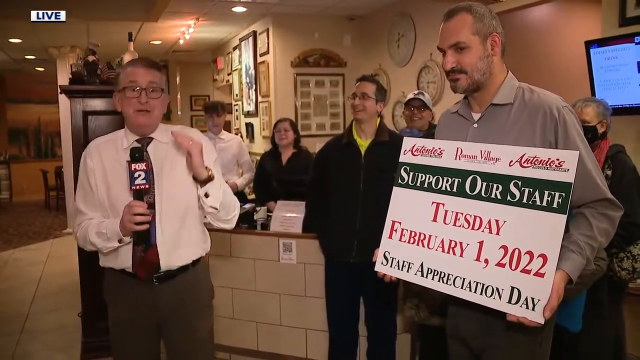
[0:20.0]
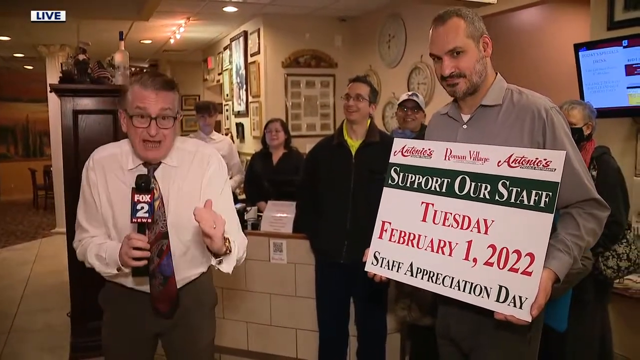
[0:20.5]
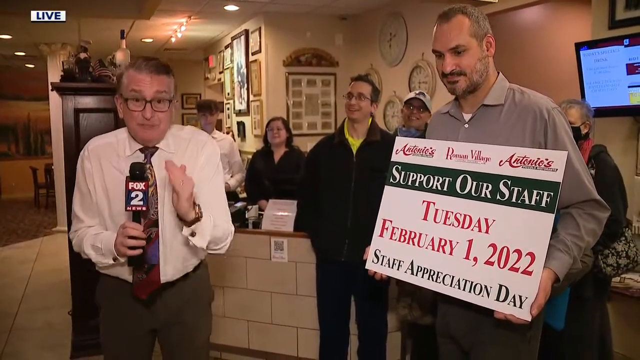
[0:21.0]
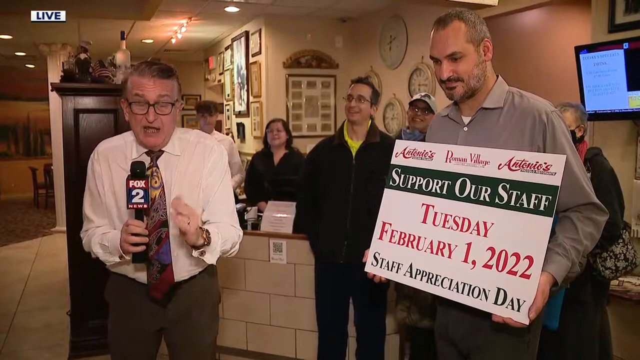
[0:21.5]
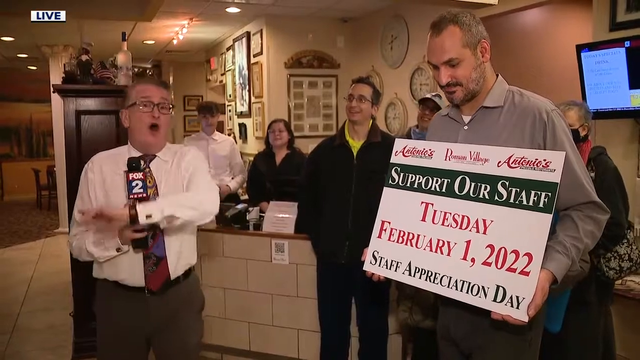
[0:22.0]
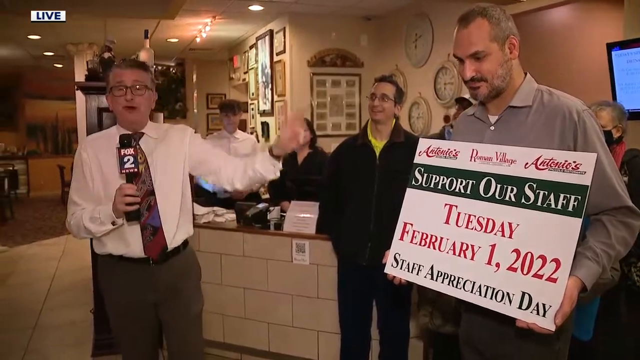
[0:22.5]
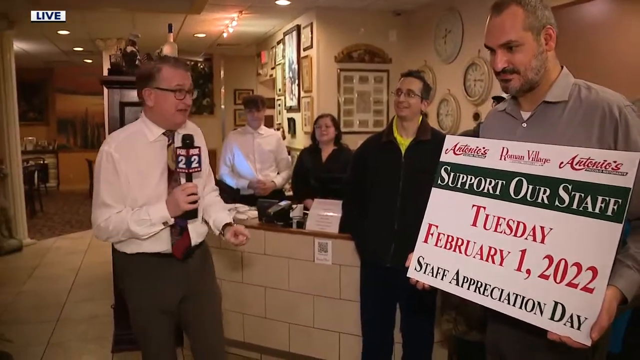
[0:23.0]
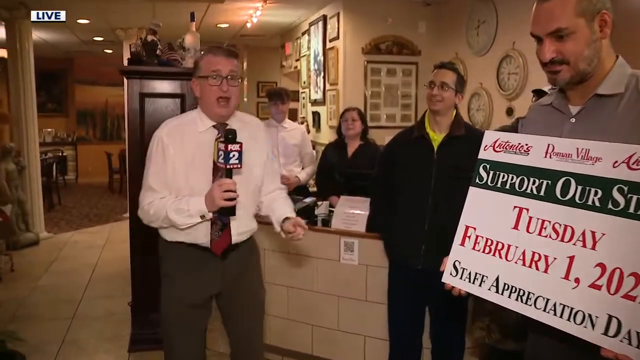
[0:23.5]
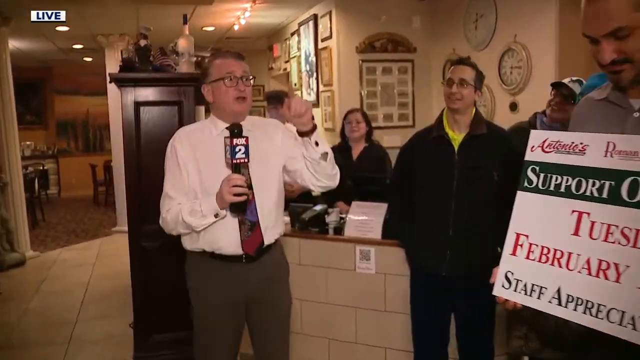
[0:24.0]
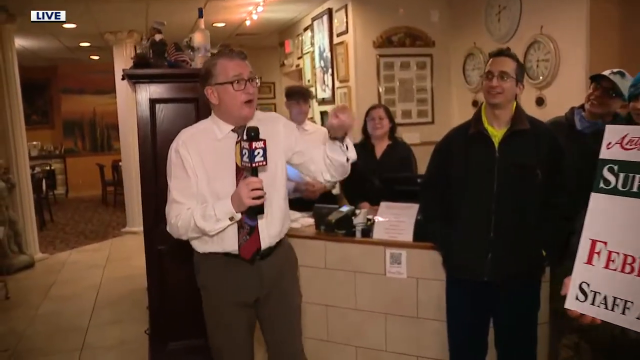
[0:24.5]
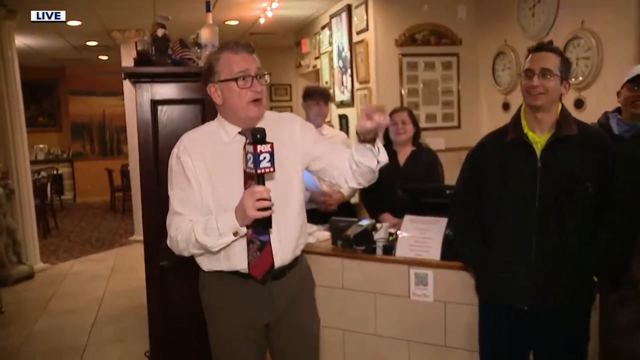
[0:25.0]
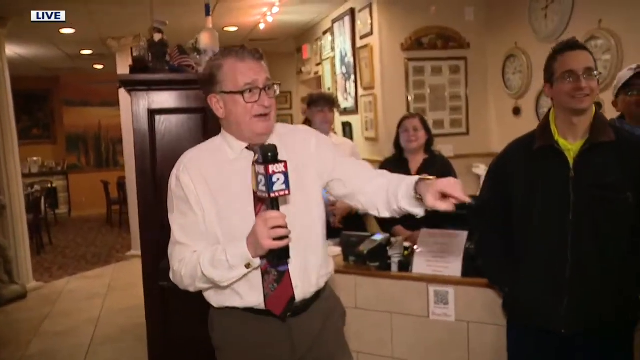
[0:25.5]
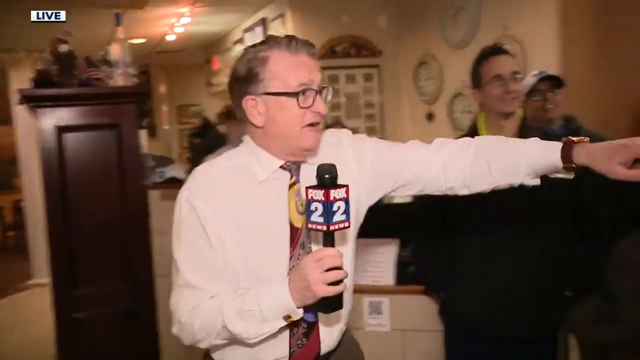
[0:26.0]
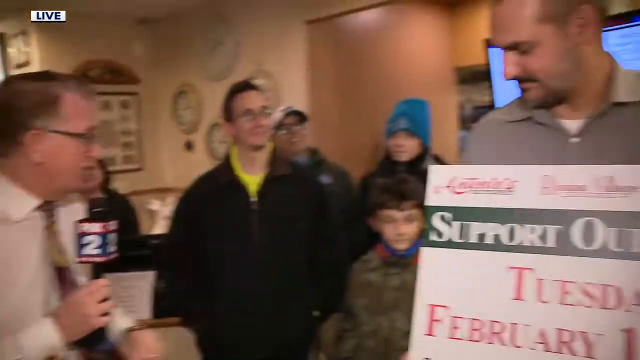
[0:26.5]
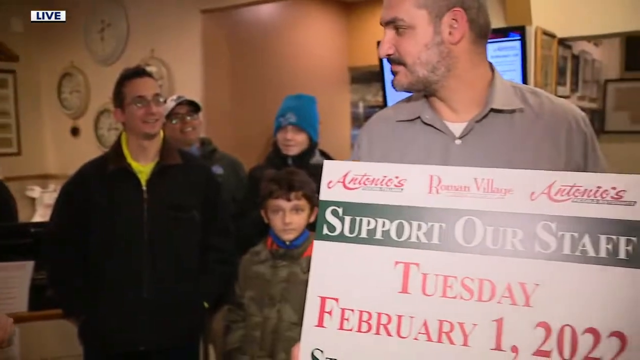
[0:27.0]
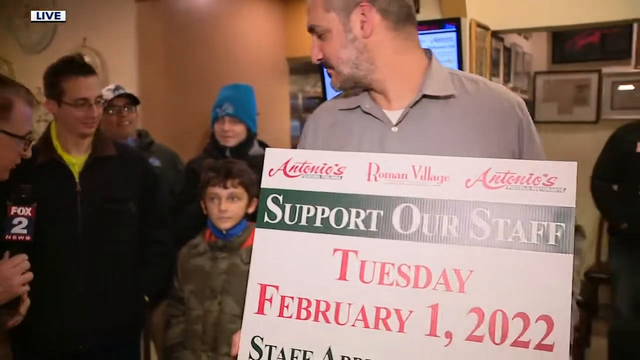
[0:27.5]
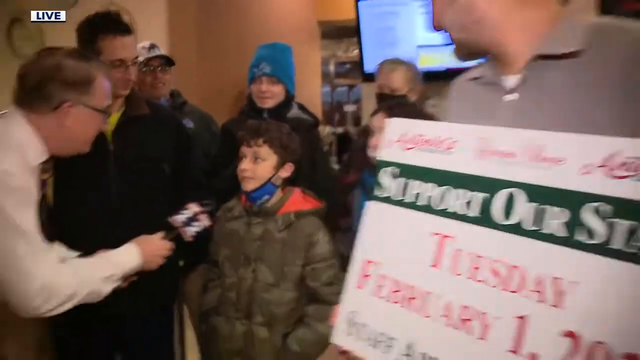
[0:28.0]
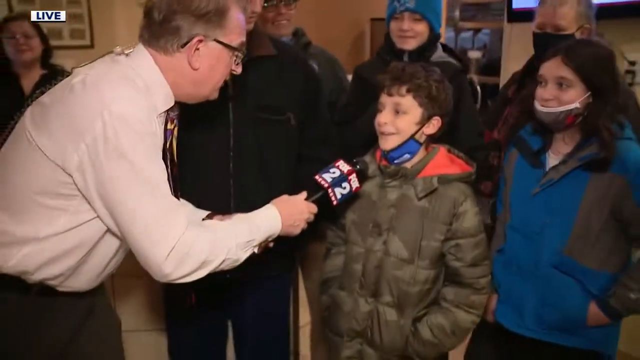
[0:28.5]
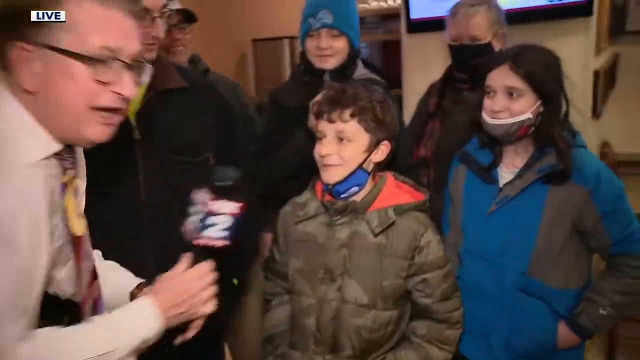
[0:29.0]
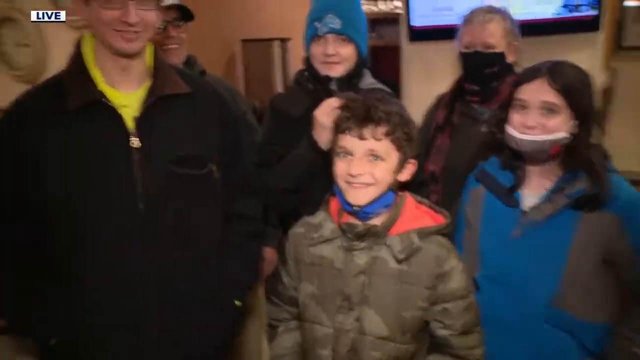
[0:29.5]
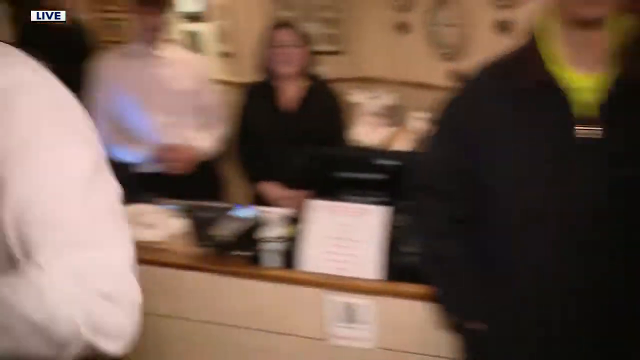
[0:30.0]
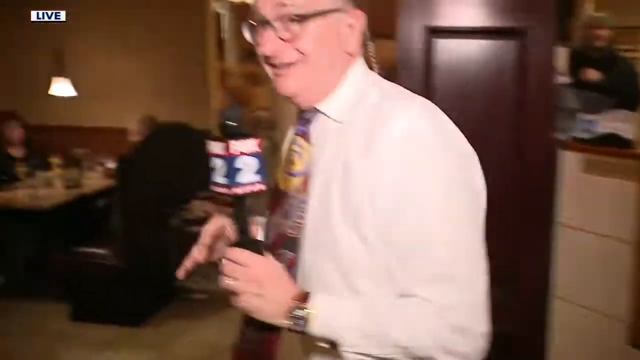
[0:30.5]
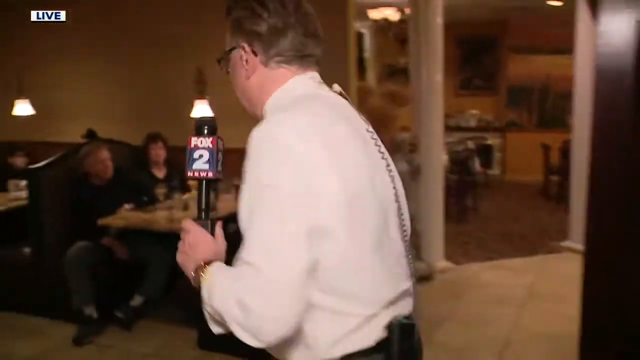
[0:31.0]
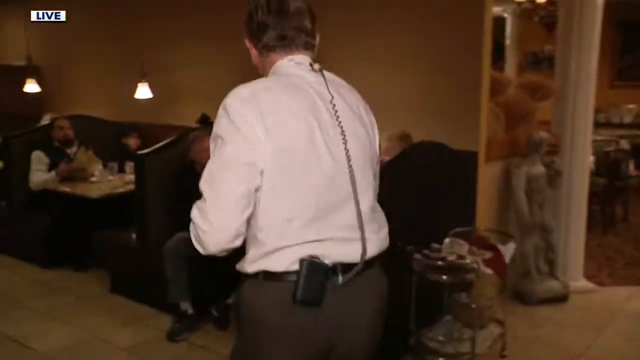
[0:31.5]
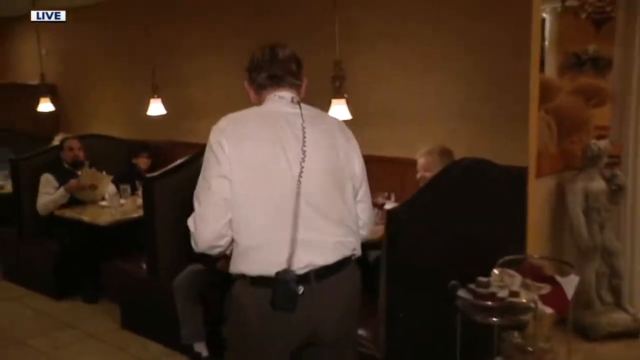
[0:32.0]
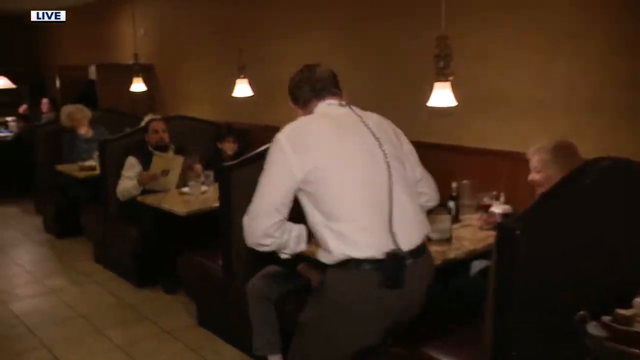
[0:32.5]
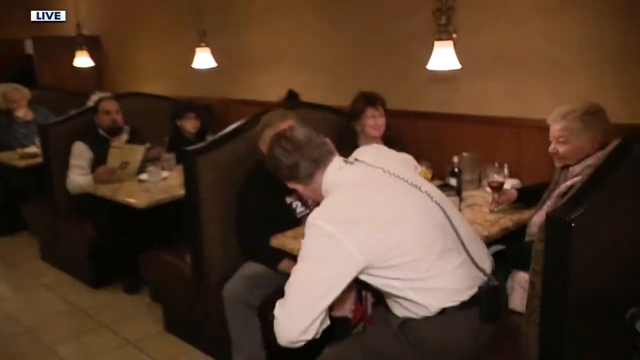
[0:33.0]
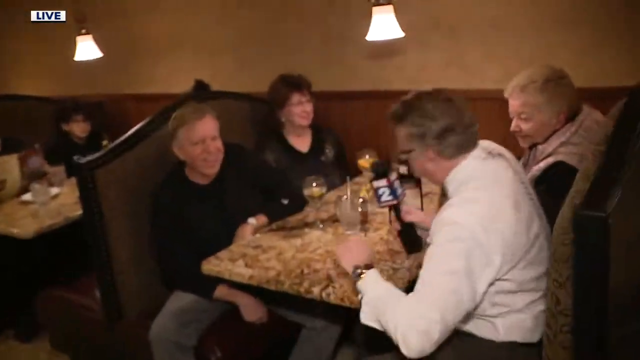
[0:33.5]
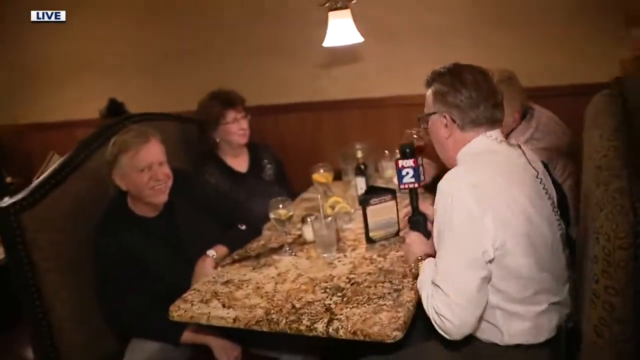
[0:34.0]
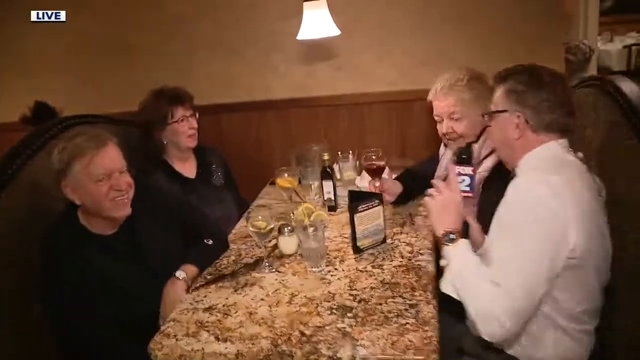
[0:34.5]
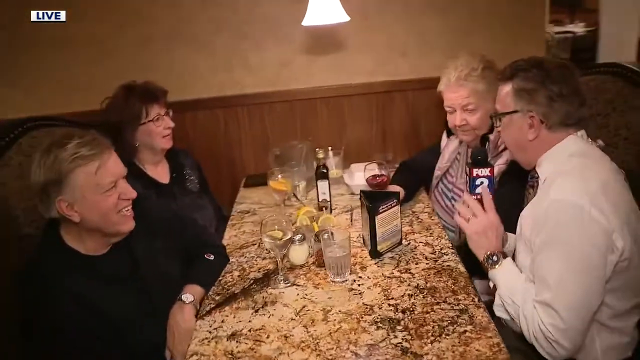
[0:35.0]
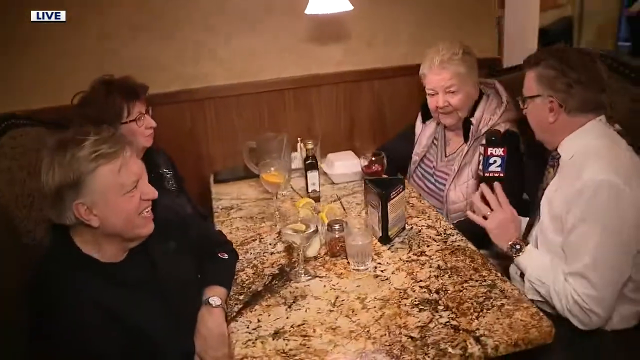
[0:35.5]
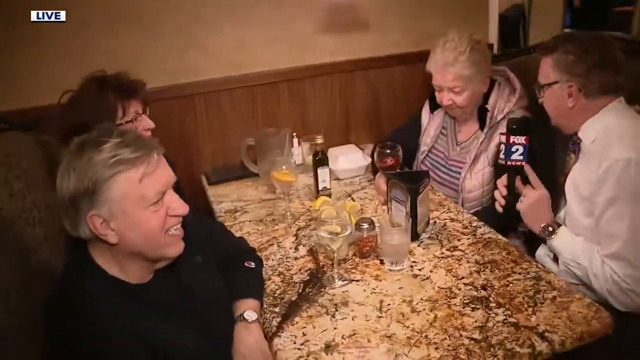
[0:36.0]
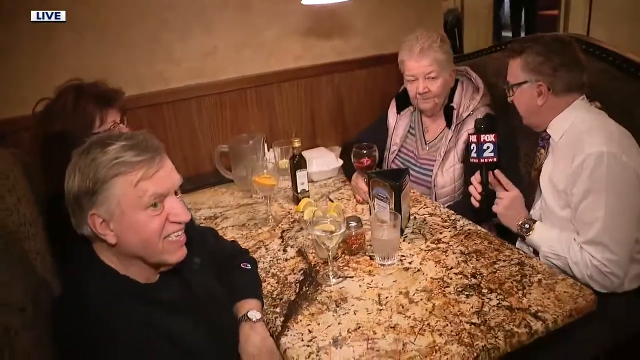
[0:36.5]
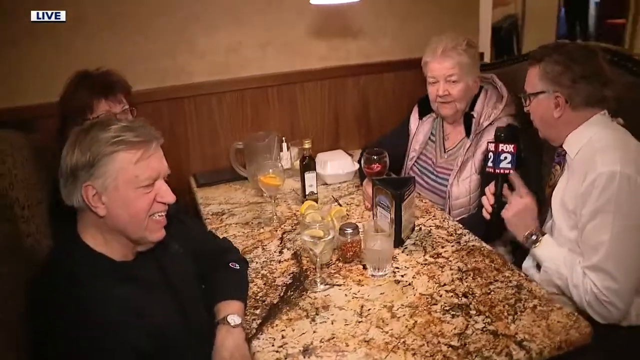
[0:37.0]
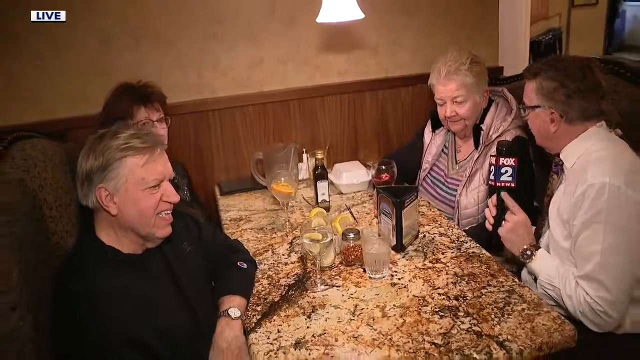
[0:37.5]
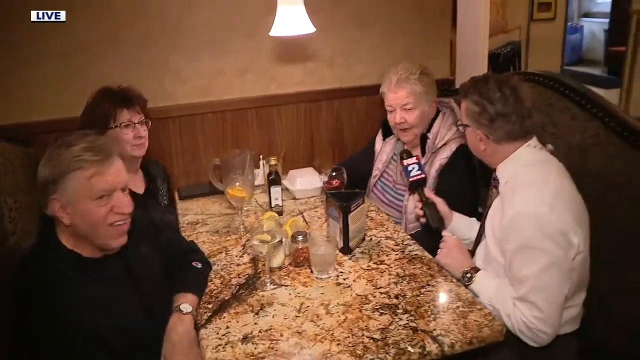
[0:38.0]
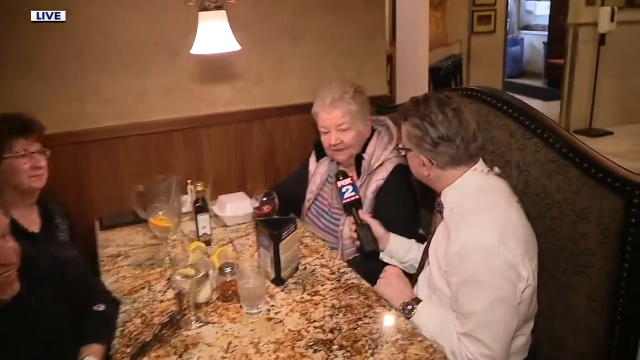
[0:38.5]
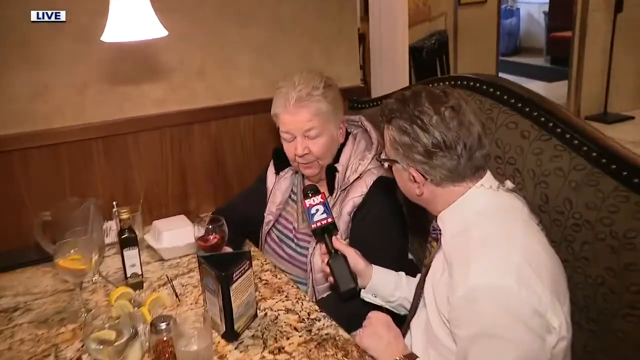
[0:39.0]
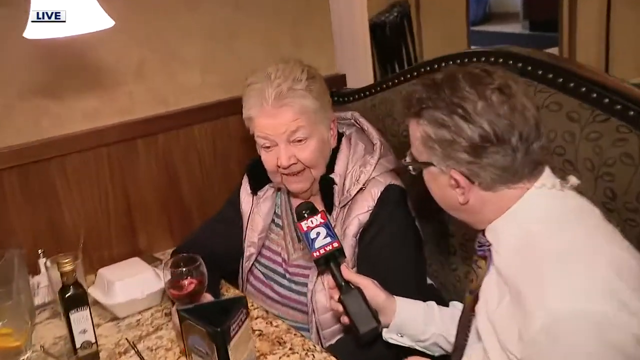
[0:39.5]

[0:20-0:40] A man in a black jacket and pants has his hands in his pocket. The reporter is very emphatic and expressive, using his body a lot: he leans forward and jerks back. He holds the mic in his right hand and waves and talks with his left hand, very animated. He steps back, points to the sign, then leans over and asks a question to a young boy in a military-pattern jacket, who has a mask slid down under his chin; the boy answers. The reporter then jogs to a table where a group sits in a stall: an older couple and another older white woman sitting down. They look like they are having different beverages, wine and beer, and the reporter asks them questions.